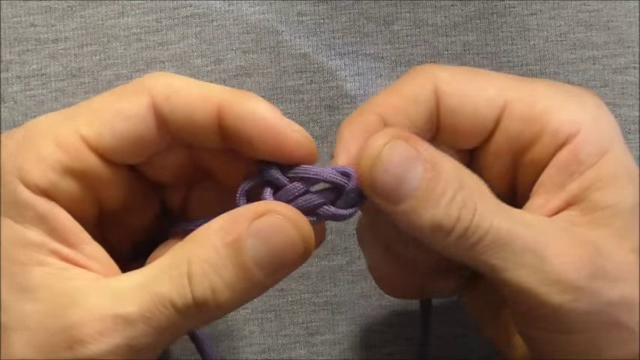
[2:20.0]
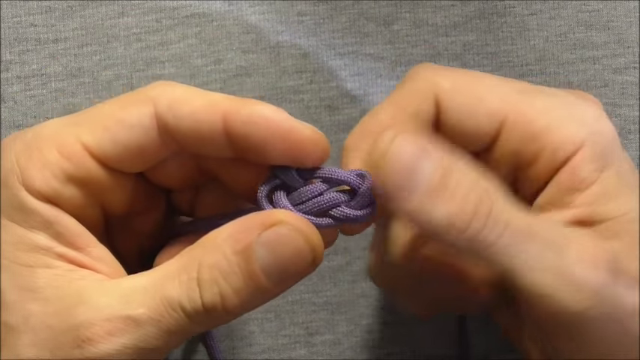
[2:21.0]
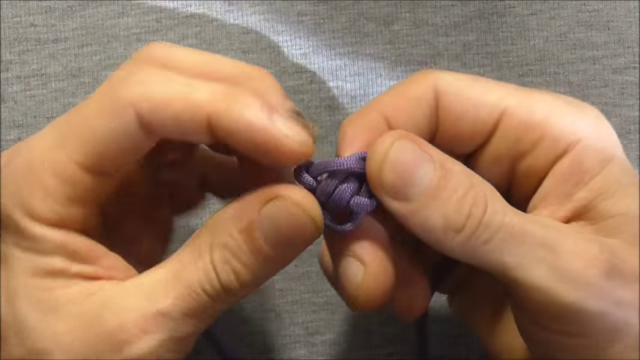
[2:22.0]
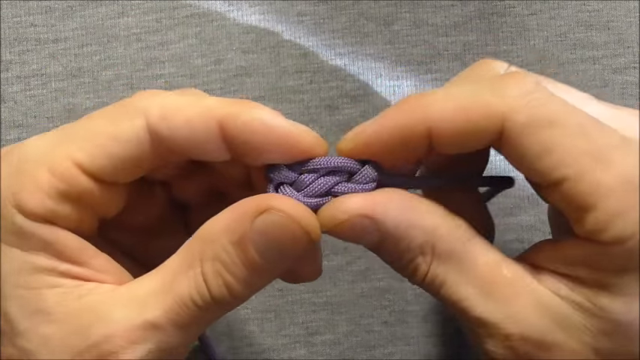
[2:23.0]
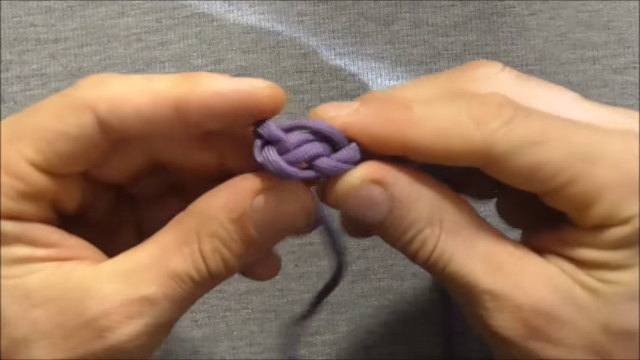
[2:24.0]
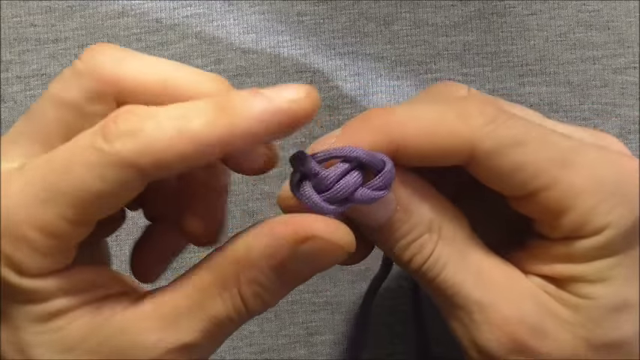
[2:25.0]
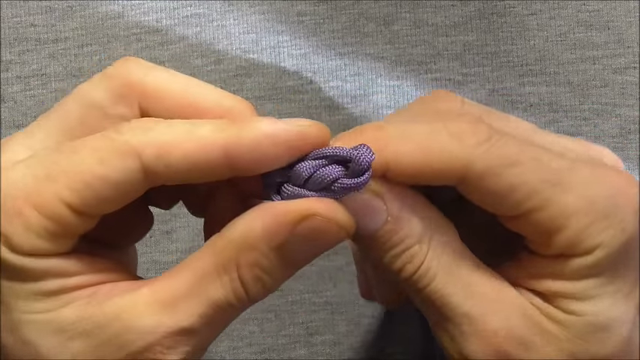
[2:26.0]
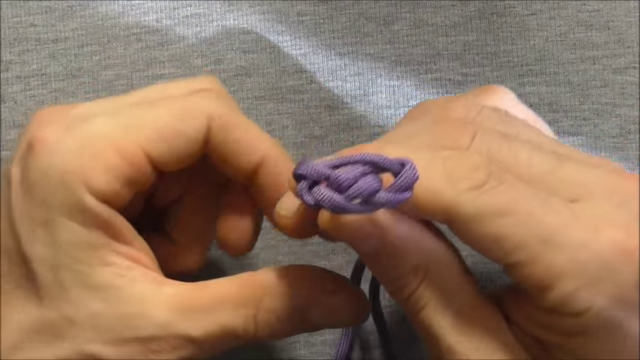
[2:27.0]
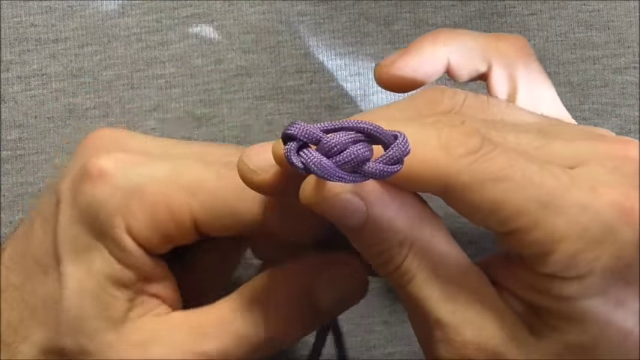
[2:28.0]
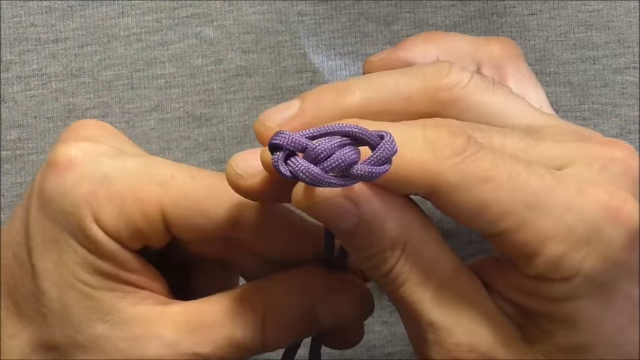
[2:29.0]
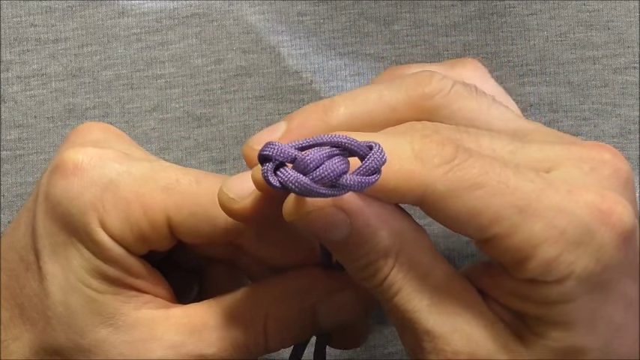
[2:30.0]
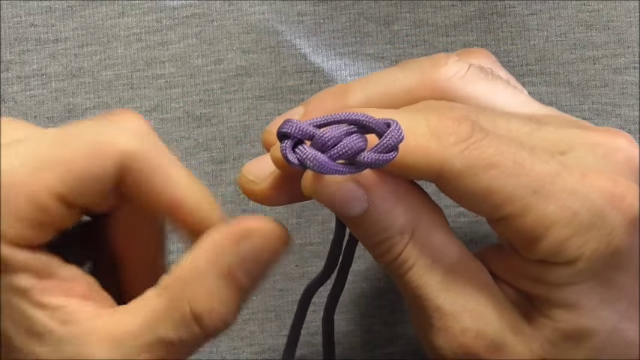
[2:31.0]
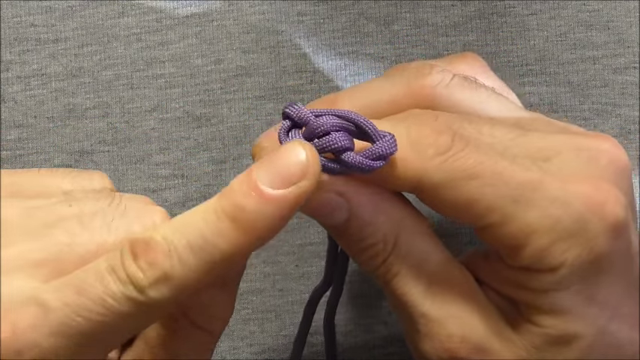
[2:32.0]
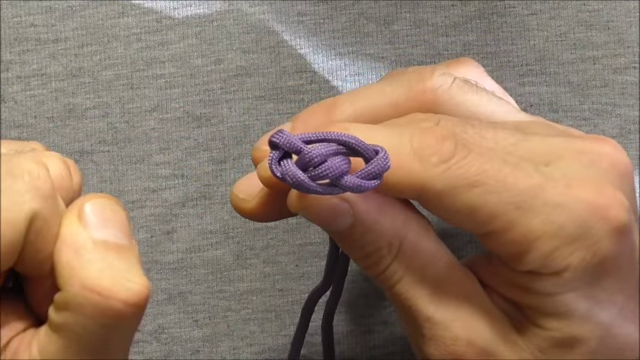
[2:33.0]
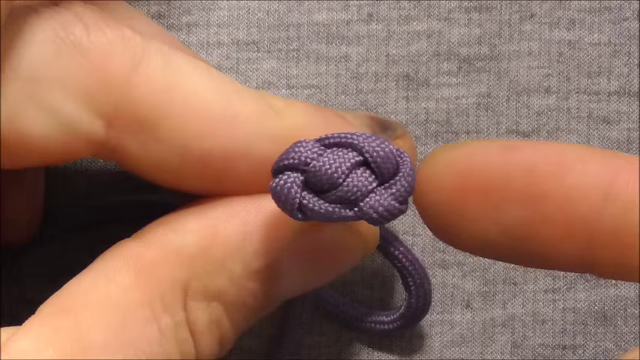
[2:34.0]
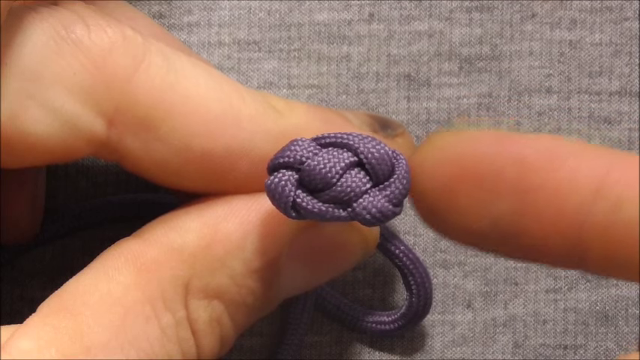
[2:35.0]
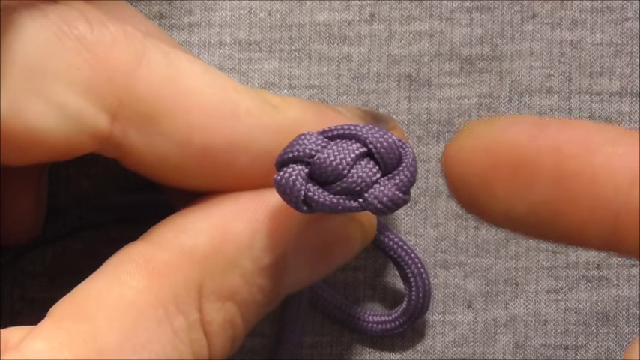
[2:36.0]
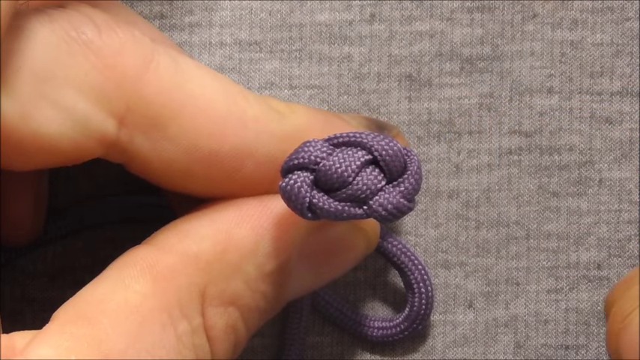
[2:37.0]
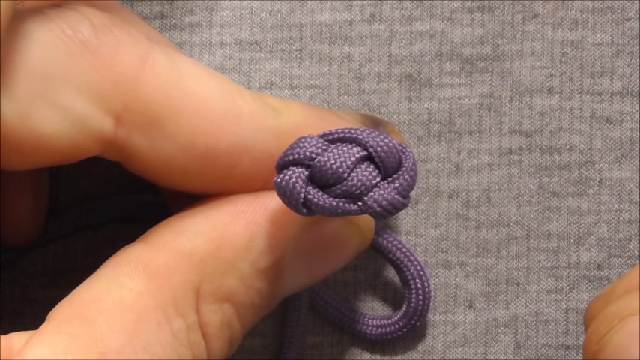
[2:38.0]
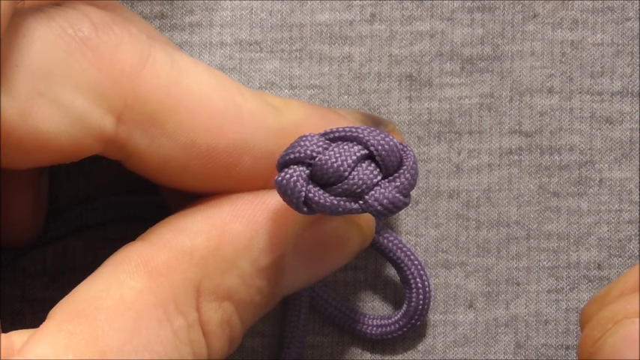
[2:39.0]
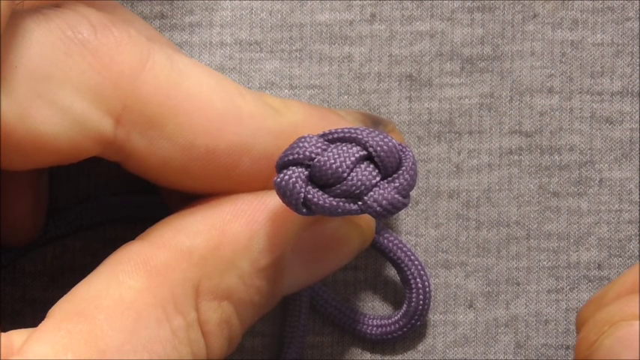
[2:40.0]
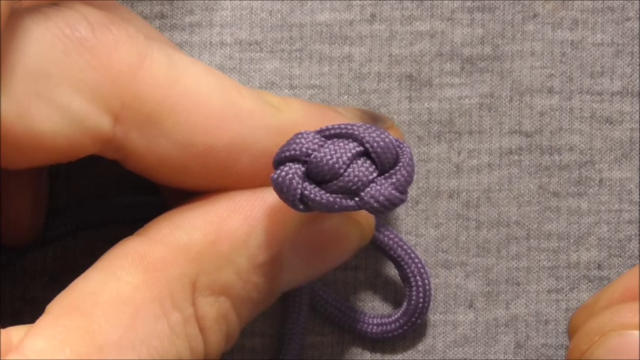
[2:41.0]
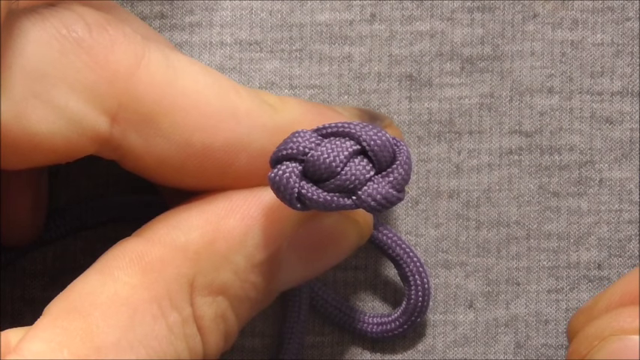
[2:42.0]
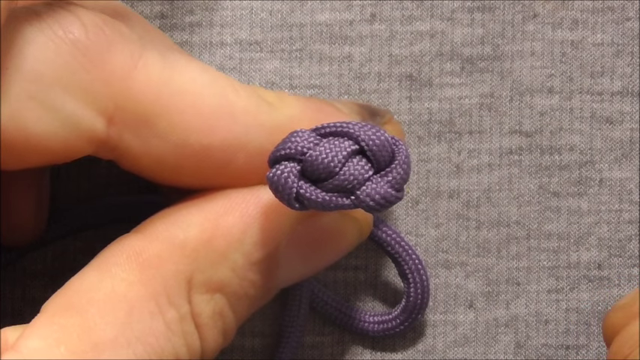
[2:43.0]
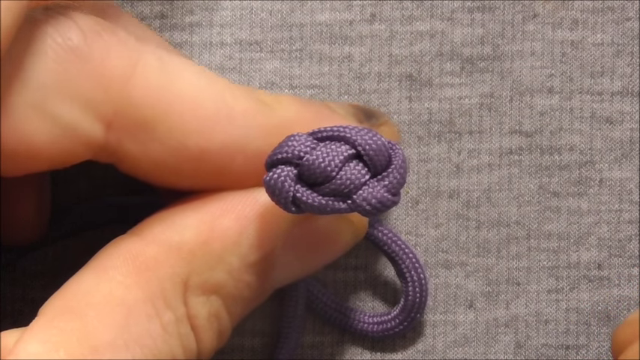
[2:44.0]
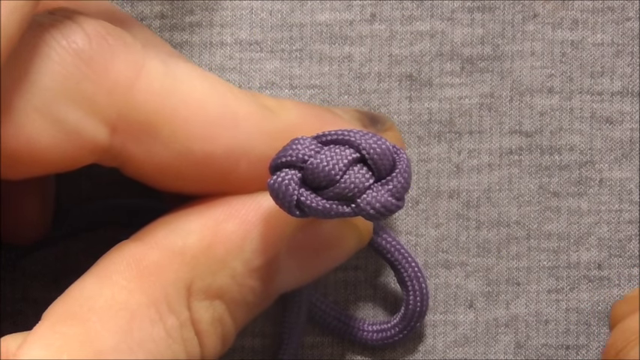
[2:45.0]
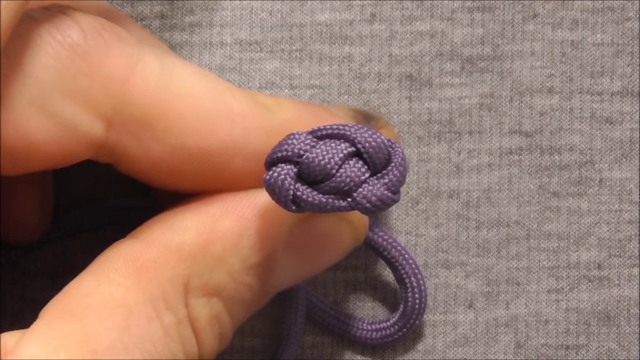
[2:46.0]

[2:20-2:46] Two hands work on a complicated-looking loop whose shape resembles a spider web. The hands have neatly manicured nails with no nail polish, and the background behind them looks like a gray woolen fabric. The hands deftly and skillfully tighten the loop, using the thumb and index fingers of both hands to form it. The result is a tight, oval-shaped loop that looks like it is made of a long strip of deep purple fabric resembling a shoelace. The thumb and index finger of the left hand pull the two hanging strands tight while the thumb and index finger of the right hand hold the loop. The left index finger then touches the loop. Next, the loop is held by the index finger and thumb of the left hand, and the right hand is not visible at all. It looks like the finished loop: there are no more spaces between the fabric strands, and it no longer looks like a spider web but like a woven button in an oval shape.